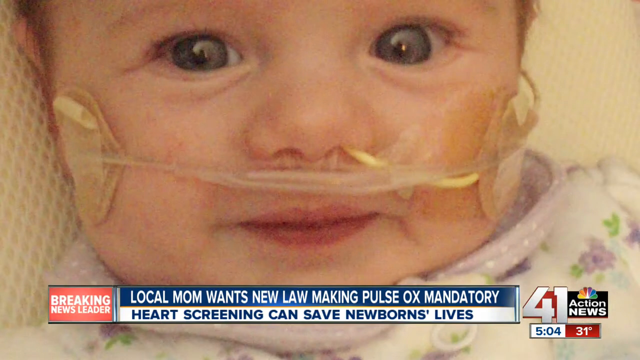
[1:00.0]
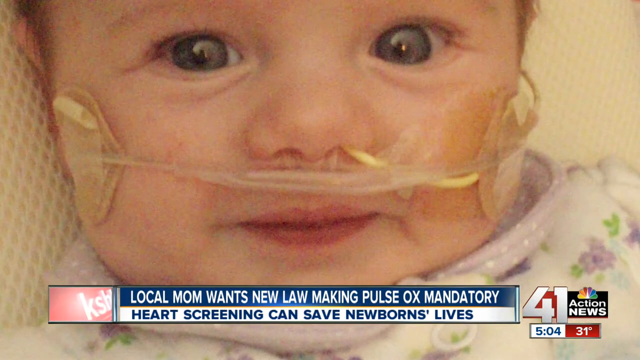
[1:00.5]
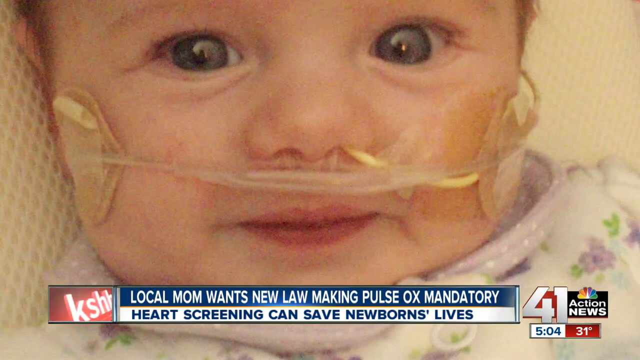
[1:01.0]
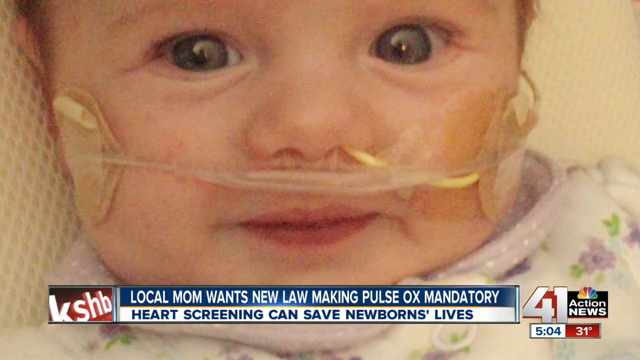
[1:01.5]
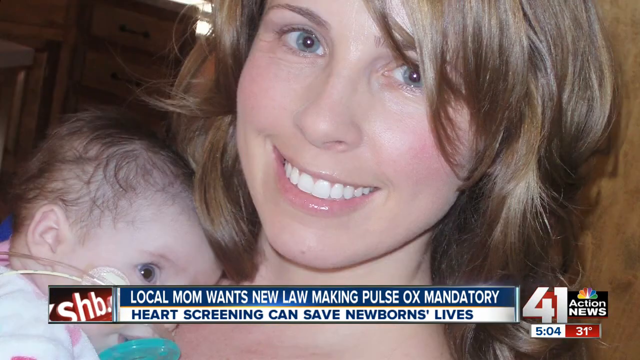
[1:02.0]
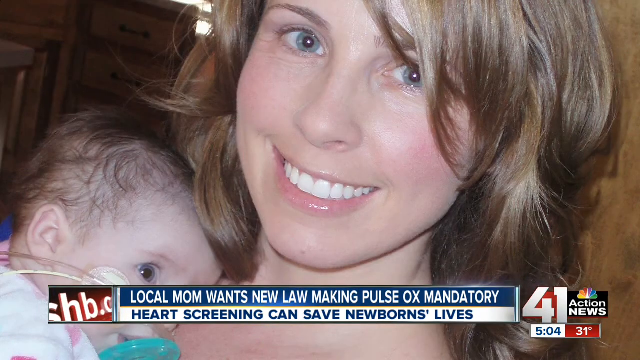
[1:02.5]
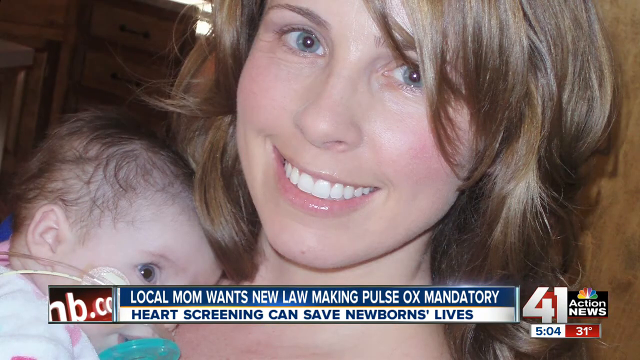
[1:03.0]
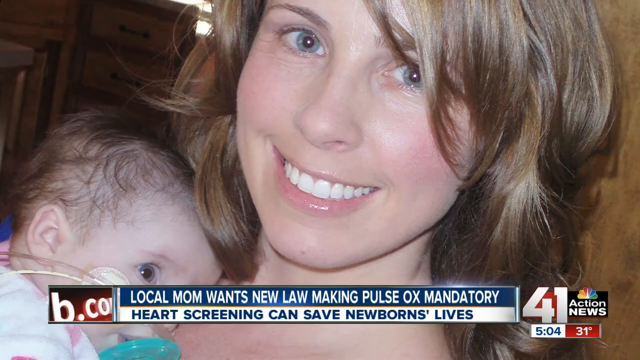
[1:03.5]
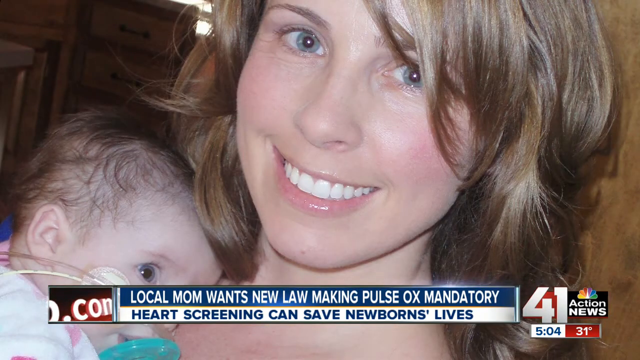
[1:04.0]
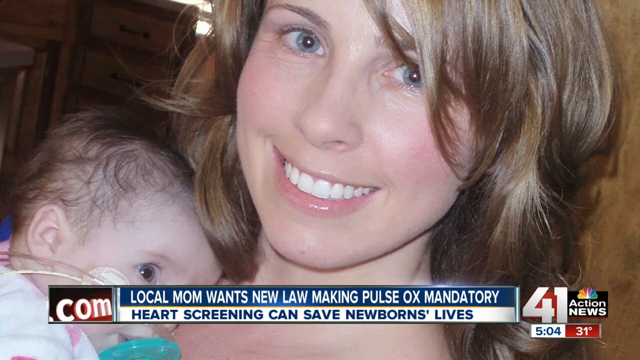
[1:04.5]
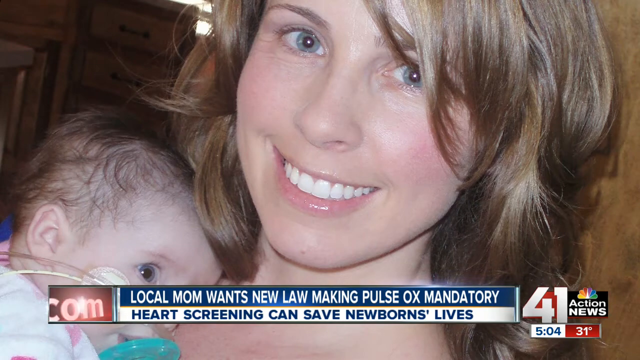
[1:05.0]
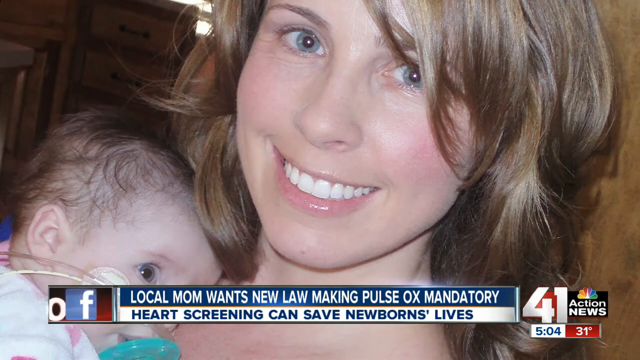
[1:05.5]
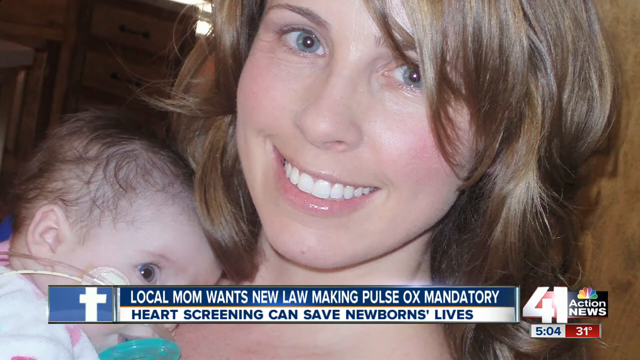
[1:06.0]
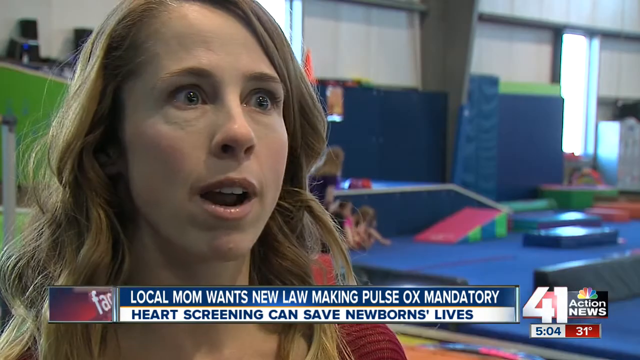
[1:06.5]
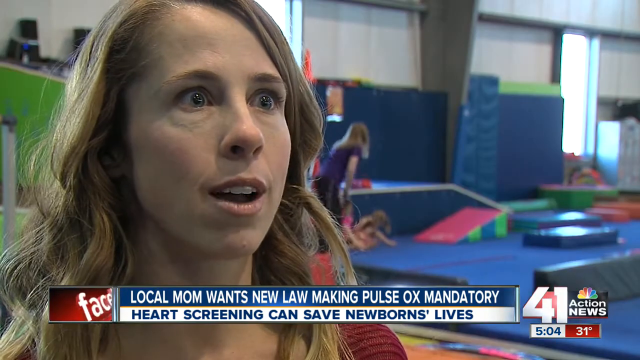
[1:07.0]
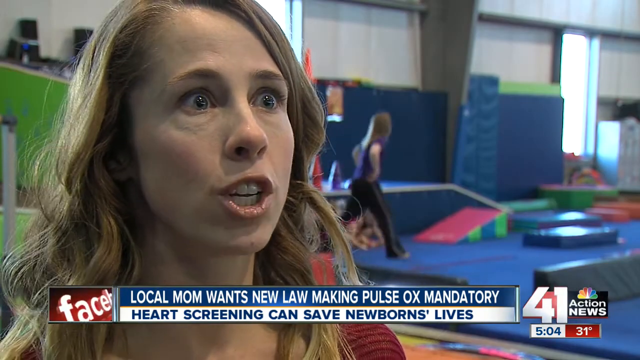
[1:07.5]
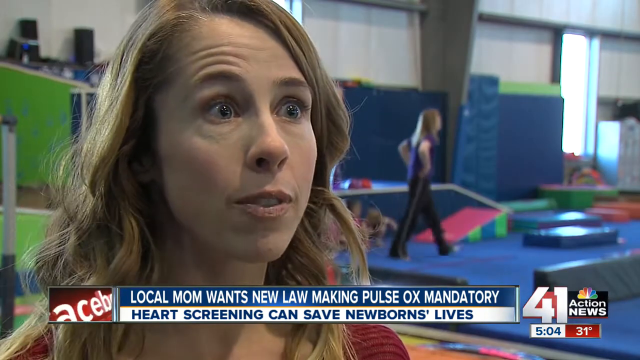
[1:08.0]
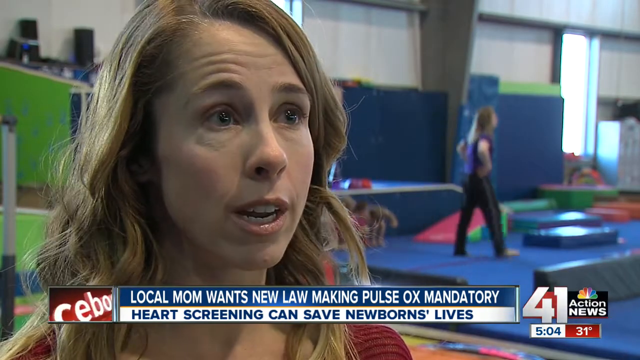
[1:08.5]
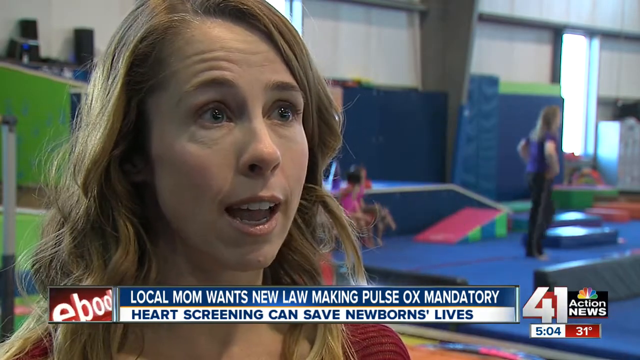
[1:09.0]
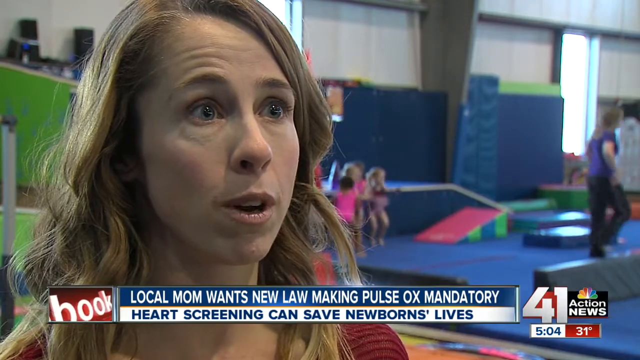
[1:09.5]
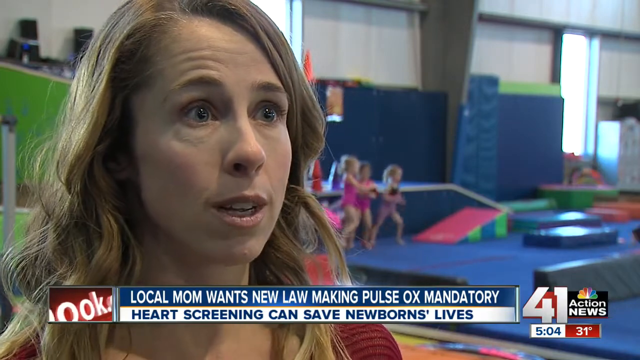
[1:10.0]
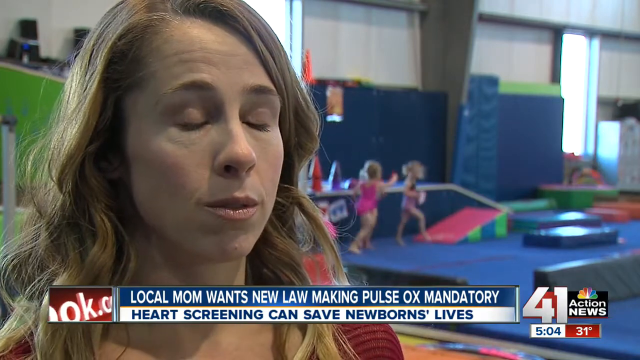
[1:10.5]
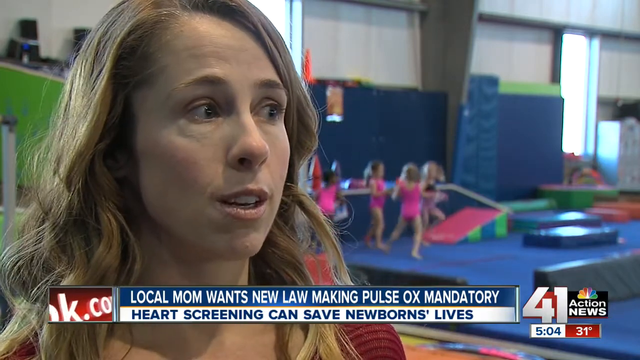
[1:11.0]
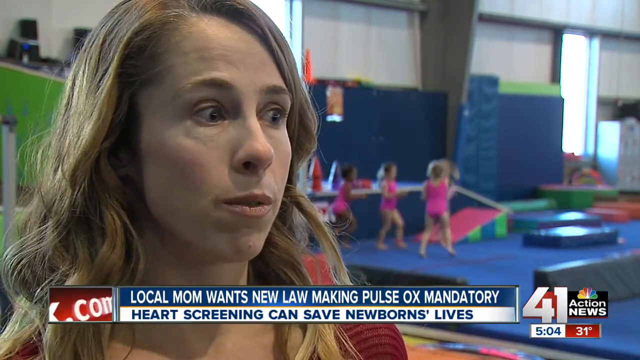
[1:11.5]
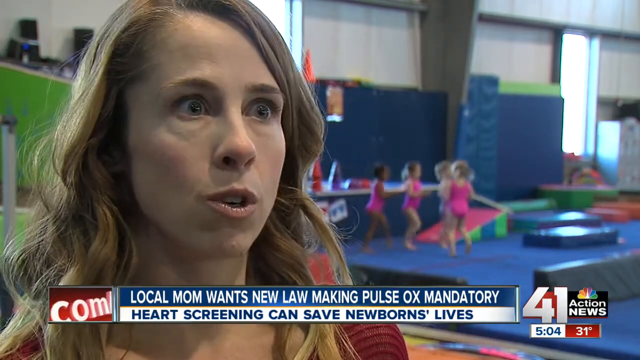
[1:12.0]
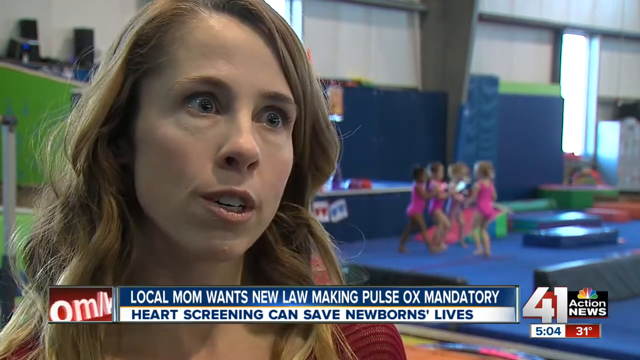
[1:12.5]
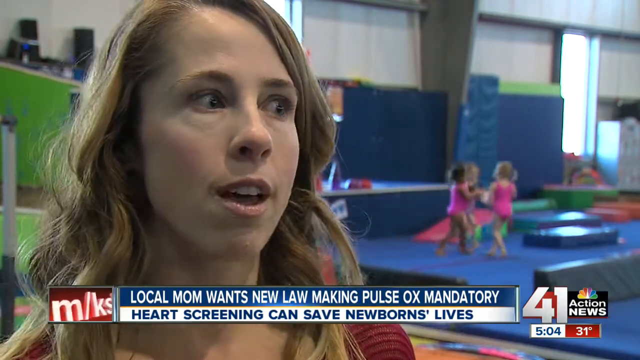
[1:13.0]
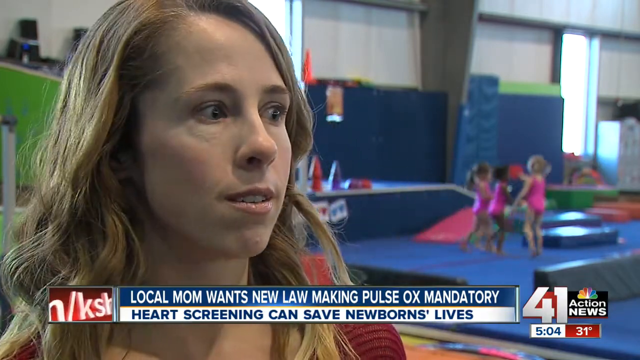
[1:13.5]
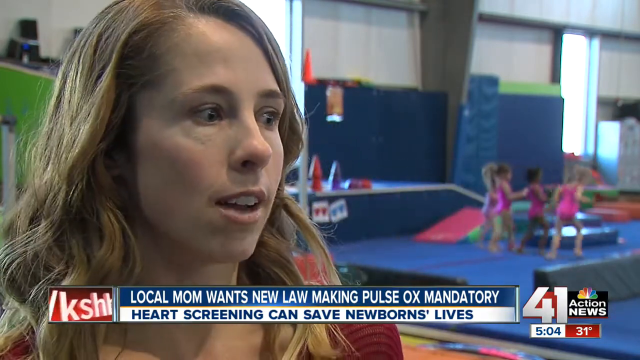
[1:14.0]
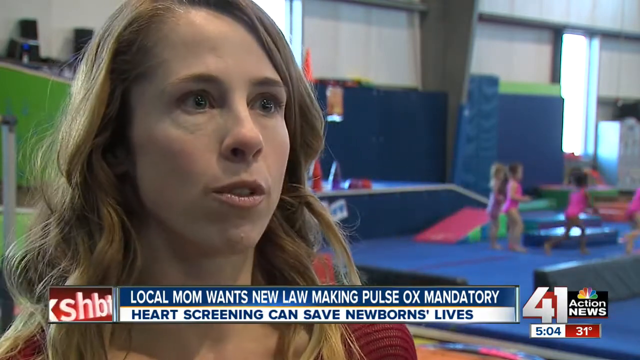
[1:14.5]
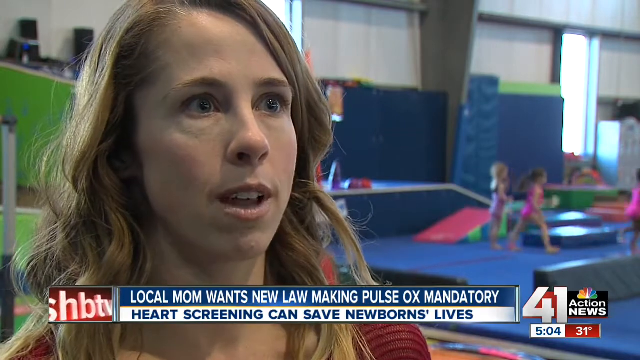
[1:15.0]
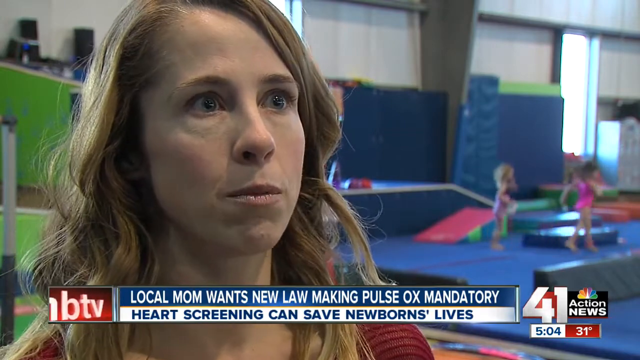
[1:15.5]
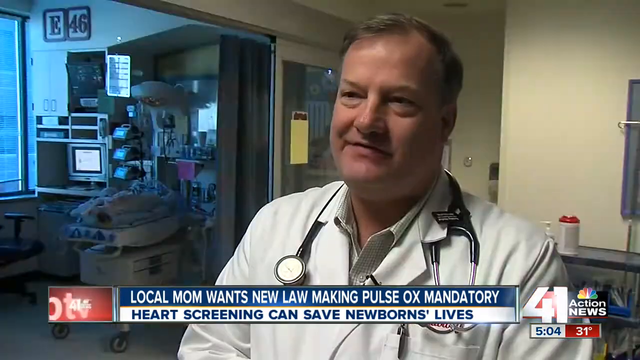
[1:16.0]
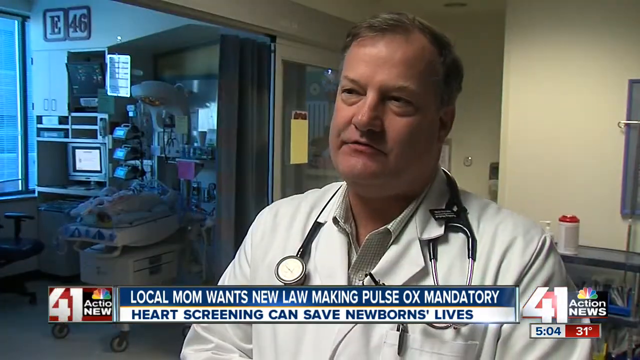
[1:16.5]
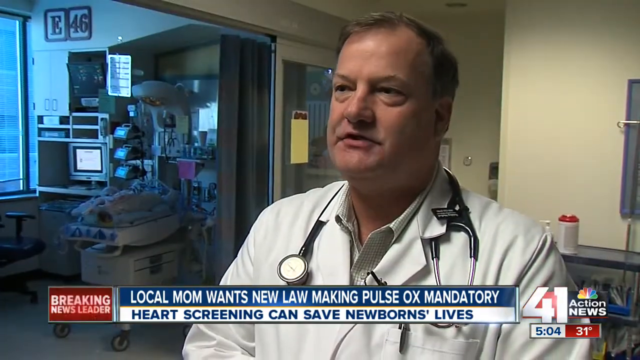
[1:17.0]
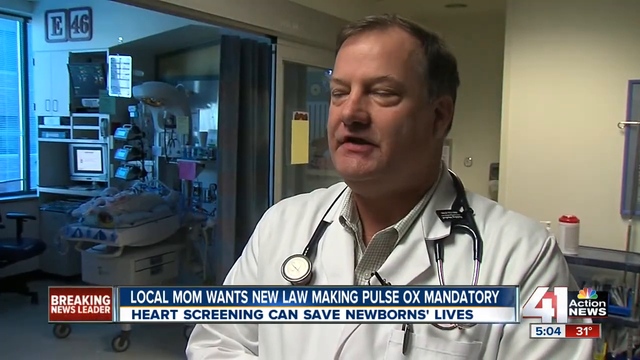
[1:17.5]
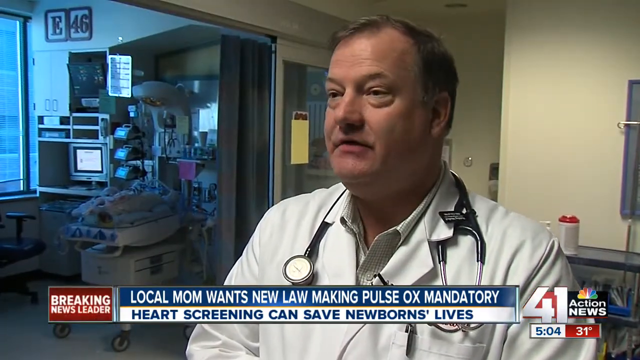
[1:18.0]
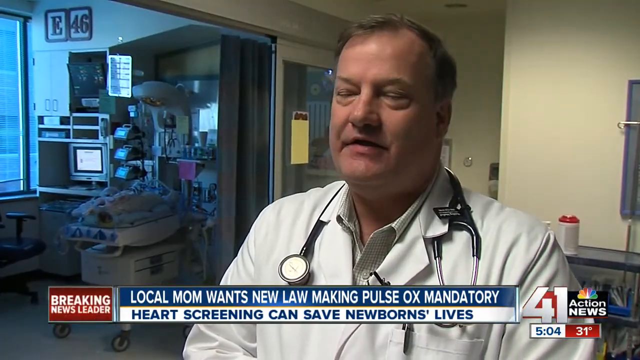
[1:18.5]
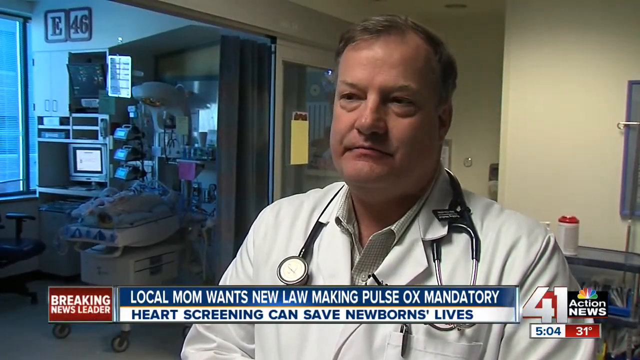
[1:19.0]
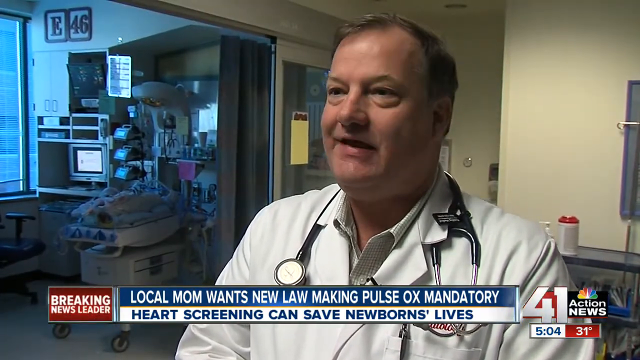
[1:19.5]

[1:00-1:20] A small baby who looks like a newborn has pipes connected to her nostrils. A picture shows a white newborn baby and mother; both have light blue eyes and black hair, and the mother smiles while looking toward the camera. The scene returns to the woman talking while facing the camera, with kids playing behind her in the indoor setting. A male doctor then talks while facing the camera; he appears to be in a kids' section of a hospital, looks to be in his late 40s, and has a stethoscope around his neck.